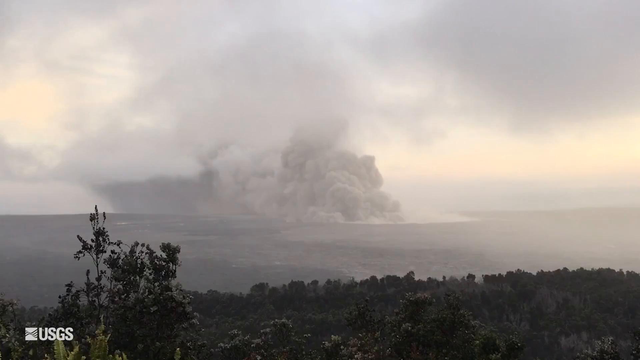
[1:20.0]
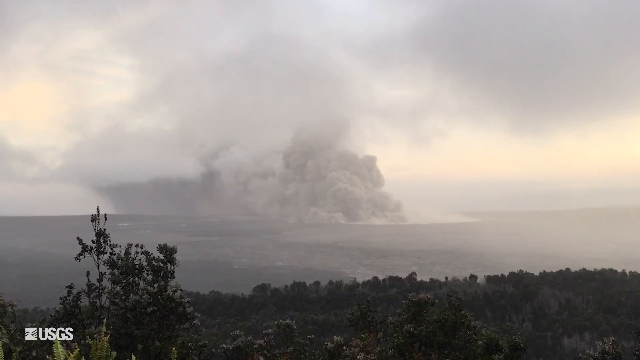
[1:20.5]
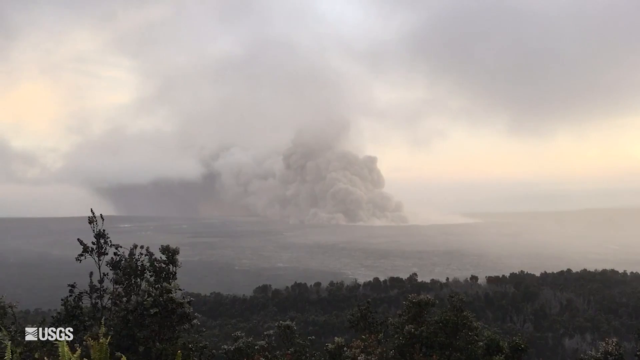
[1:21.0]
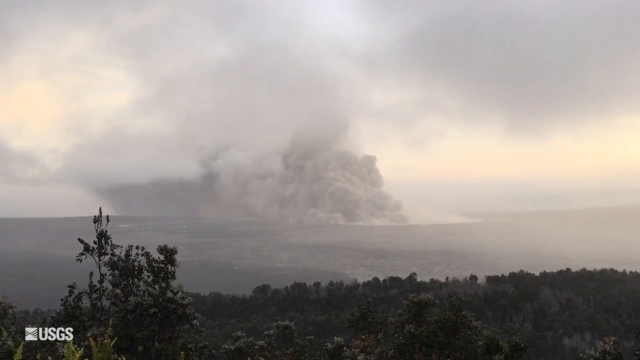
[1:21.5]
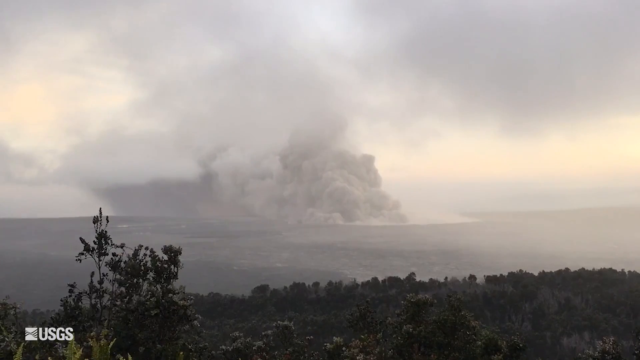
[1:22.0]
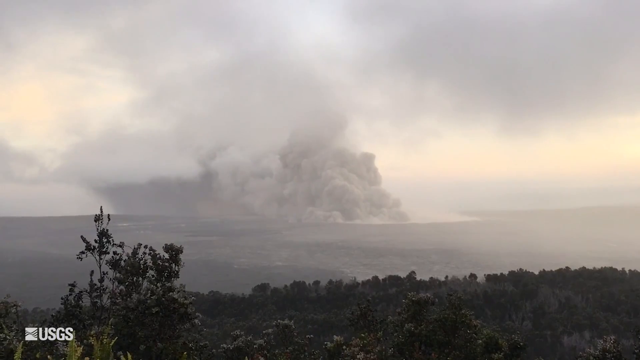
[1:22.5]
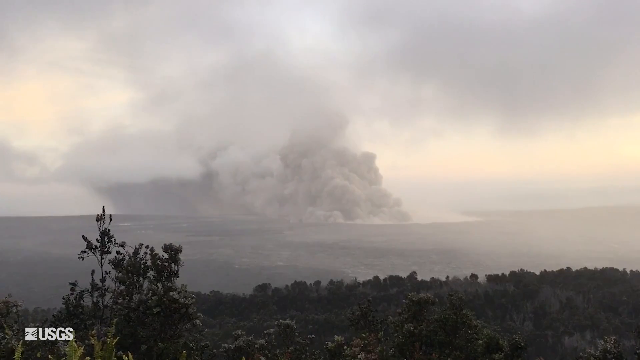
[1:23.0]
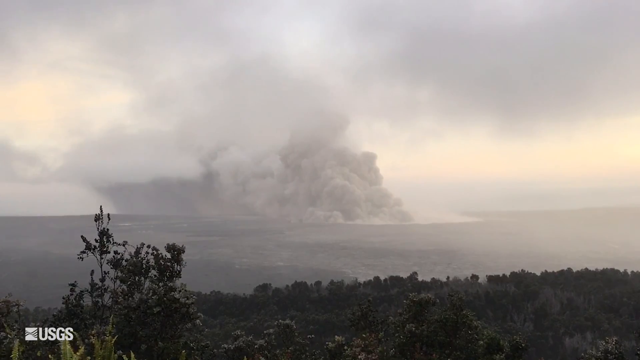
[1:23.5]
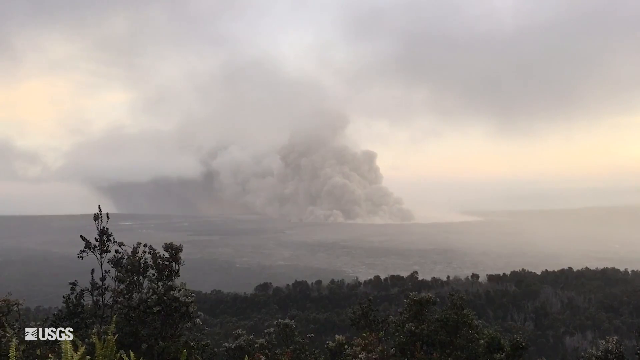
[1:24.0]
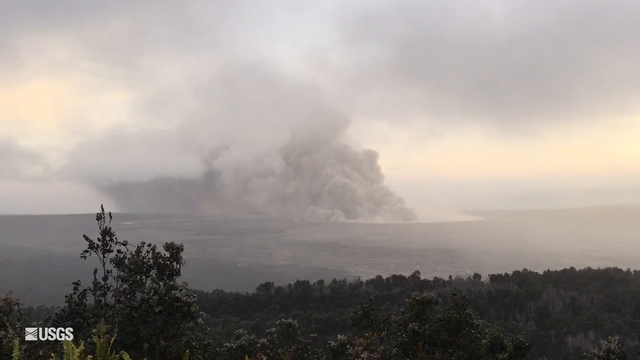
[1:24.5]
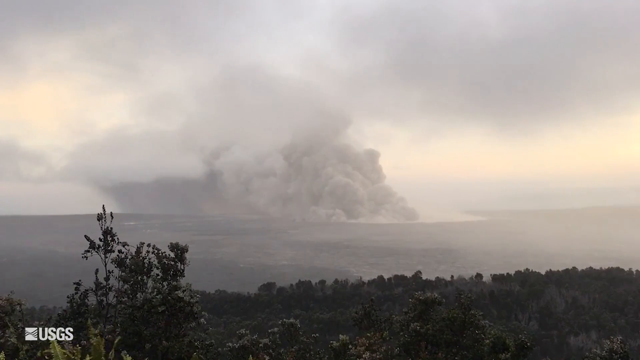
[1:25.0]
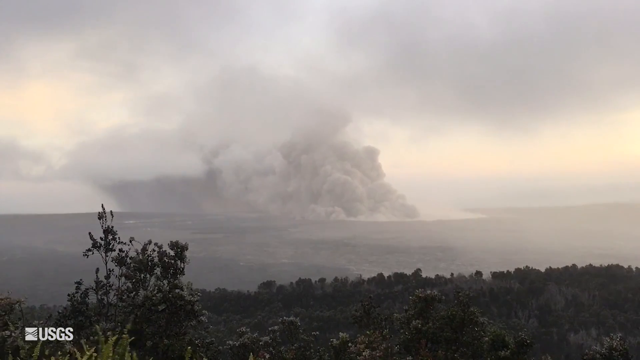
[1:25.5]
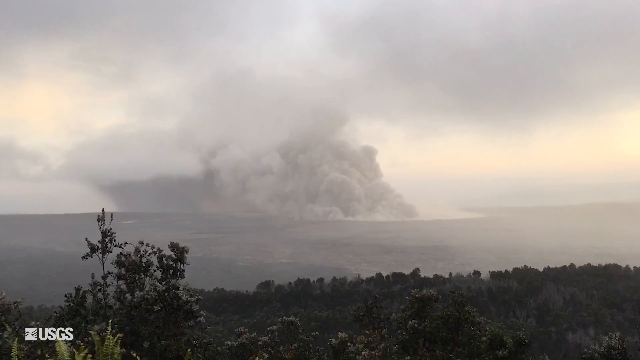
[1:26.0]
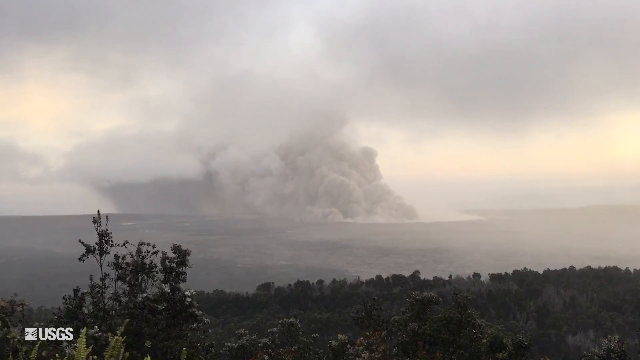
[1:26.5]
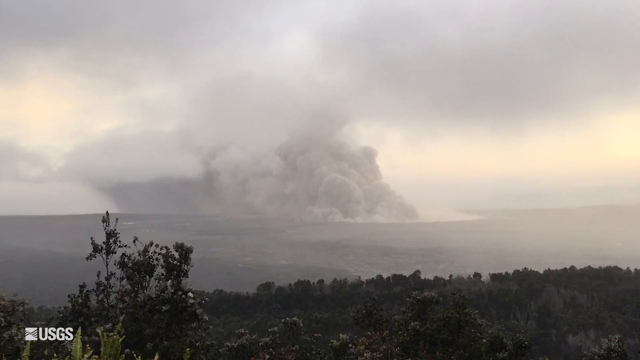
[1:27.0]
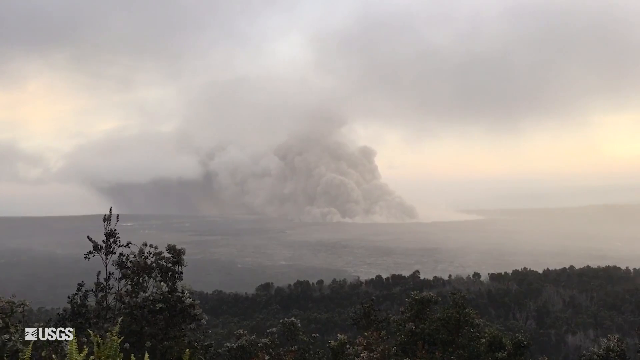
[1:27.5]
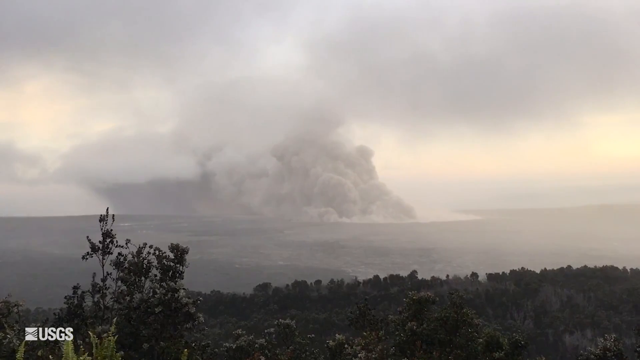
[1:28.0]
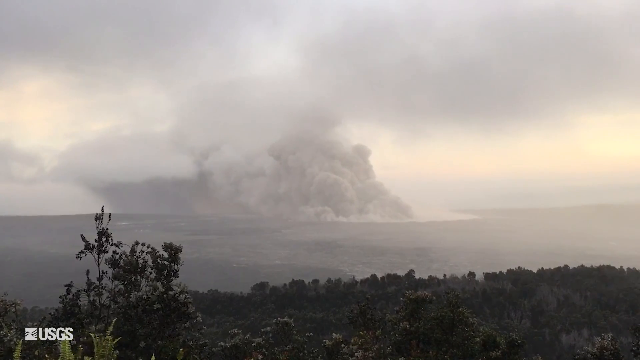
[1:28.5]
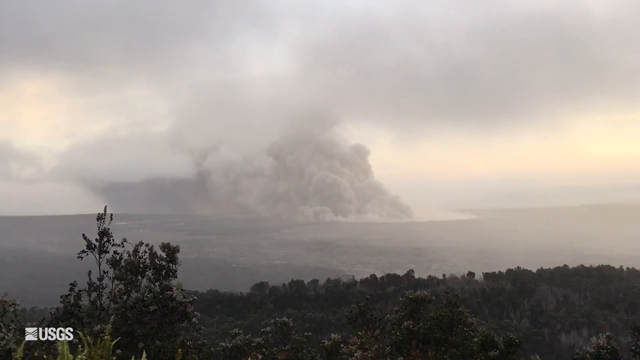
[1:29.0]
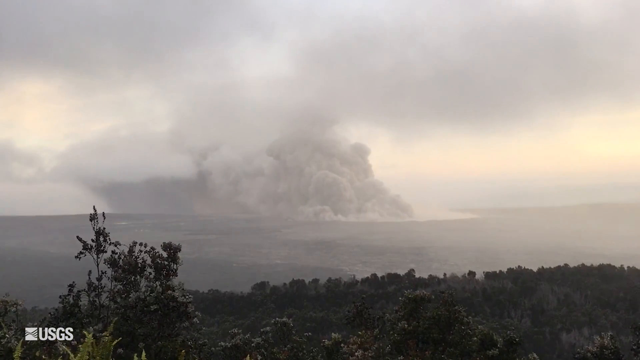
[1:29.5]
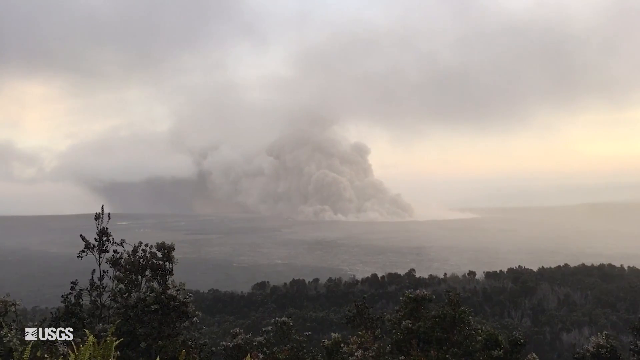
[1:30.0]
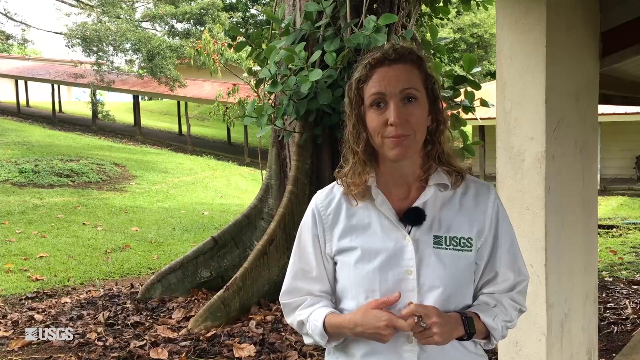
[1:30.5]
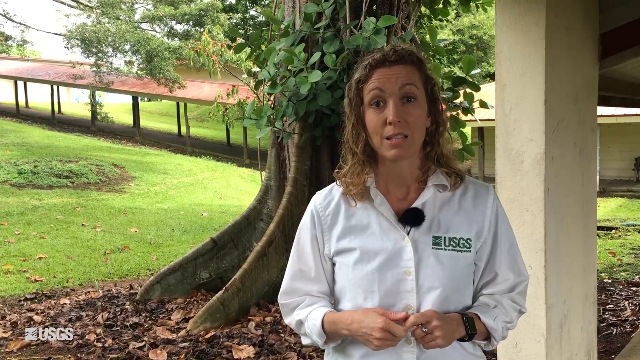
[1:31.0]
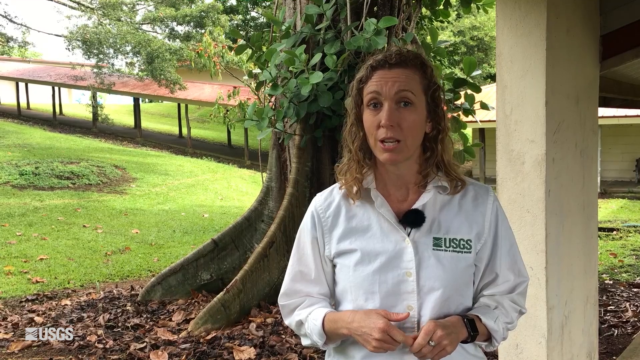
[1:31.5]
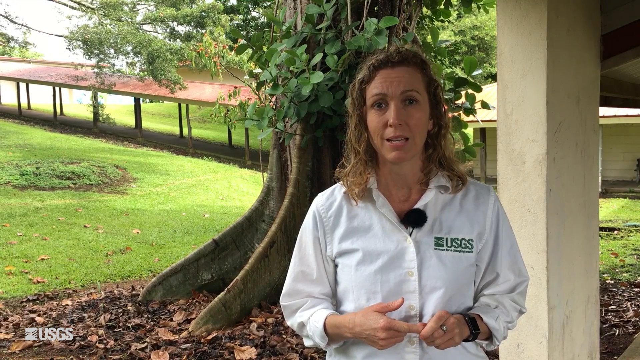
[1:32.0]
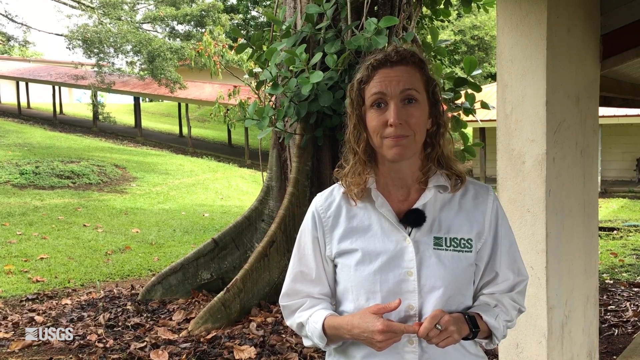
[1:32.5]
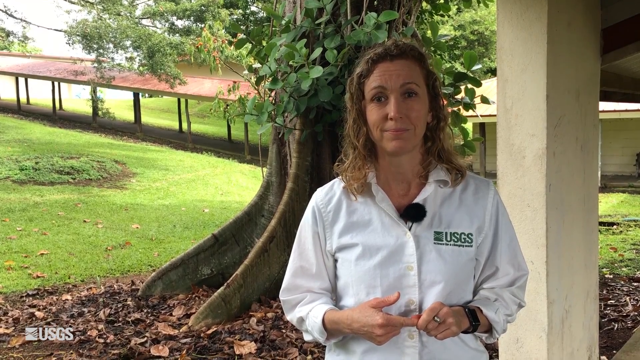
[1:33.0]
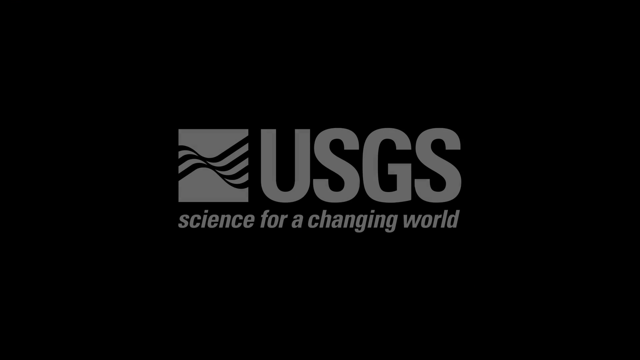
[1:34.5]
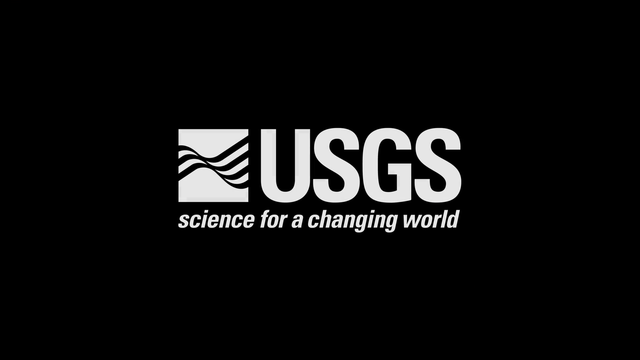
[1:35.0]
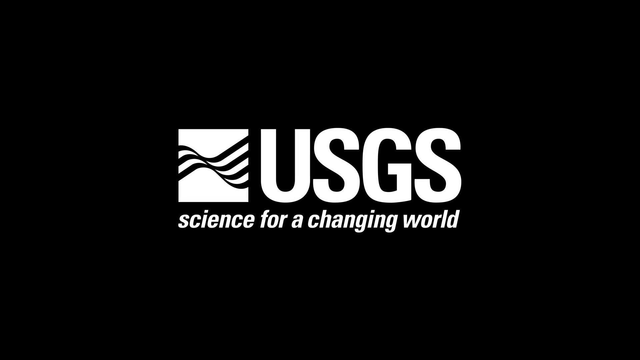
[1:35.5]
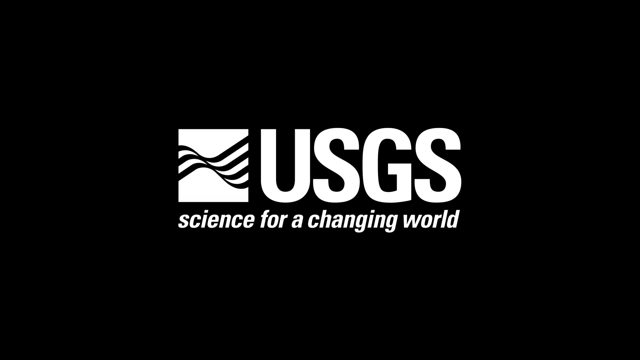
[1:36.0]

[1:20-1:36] A static shot from far away shows the eruption with its smoke and steam, while wind blows the plants. The clouds of smoke and ash, and apparently steam from the lava, increase. The geologist is shown talking again, and then the video fades to black with the text "USGS for a changing world."